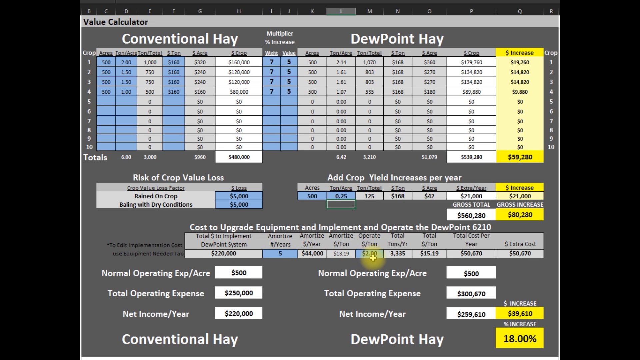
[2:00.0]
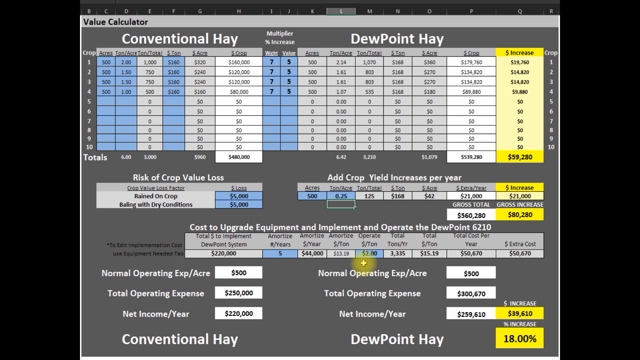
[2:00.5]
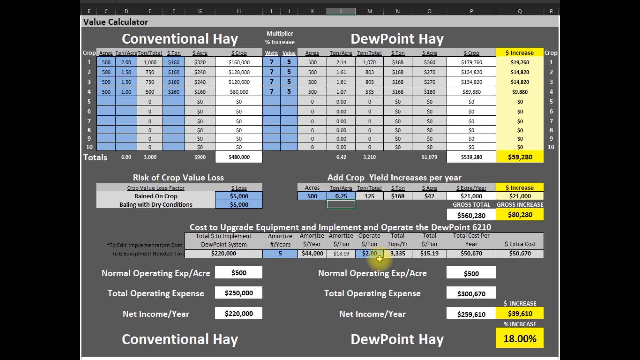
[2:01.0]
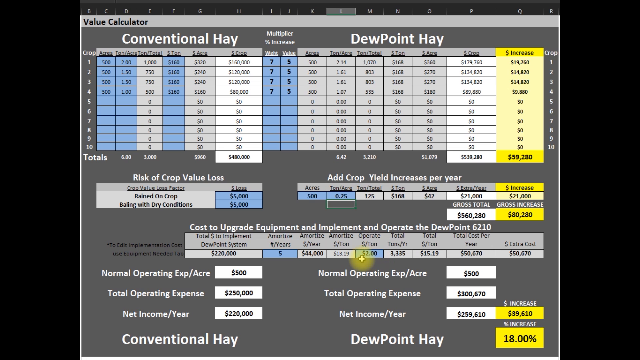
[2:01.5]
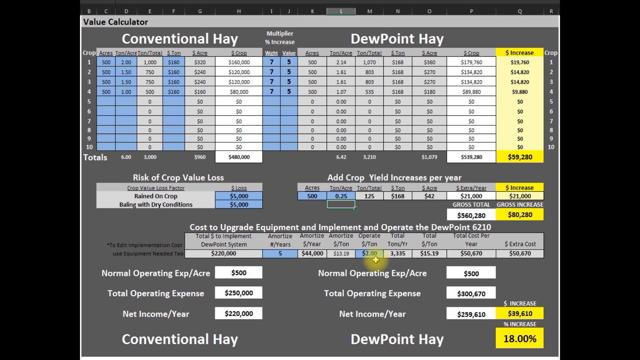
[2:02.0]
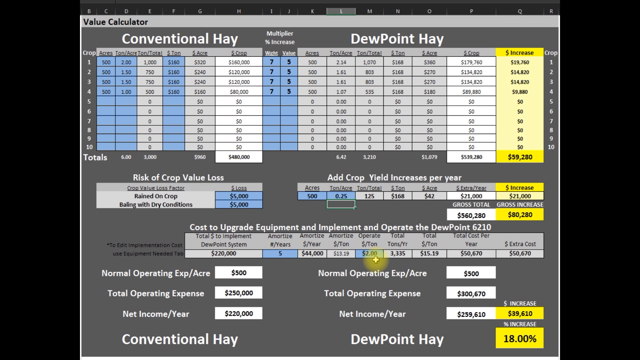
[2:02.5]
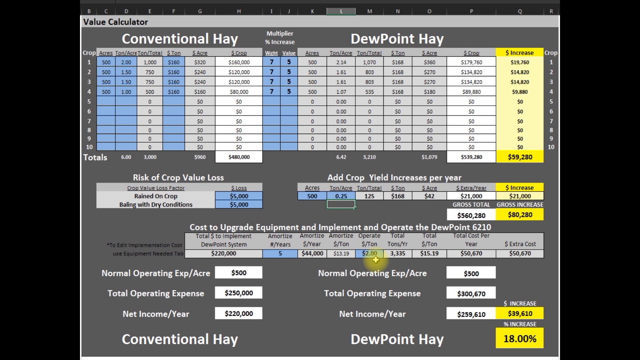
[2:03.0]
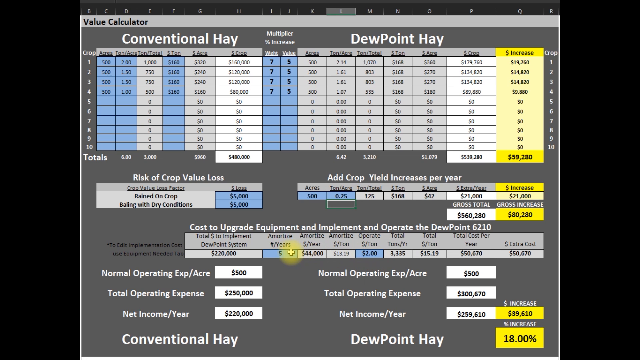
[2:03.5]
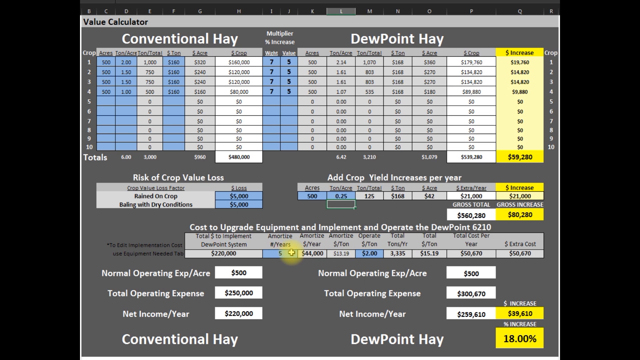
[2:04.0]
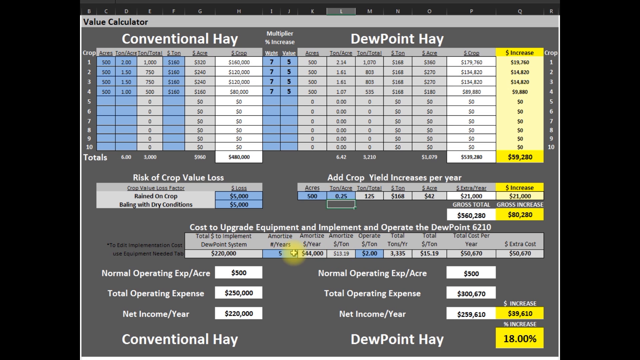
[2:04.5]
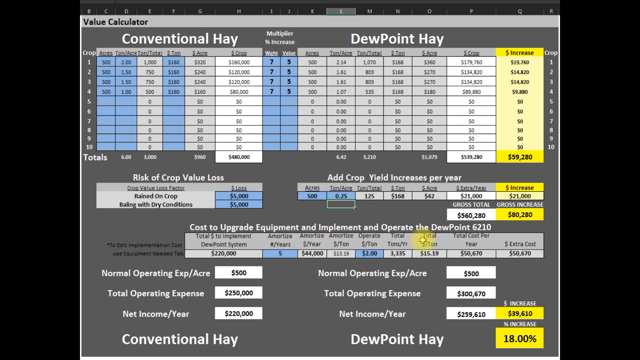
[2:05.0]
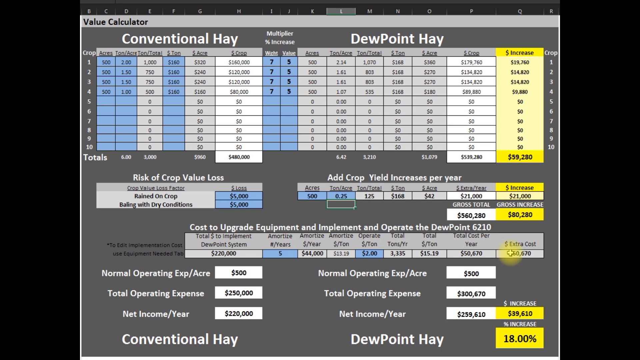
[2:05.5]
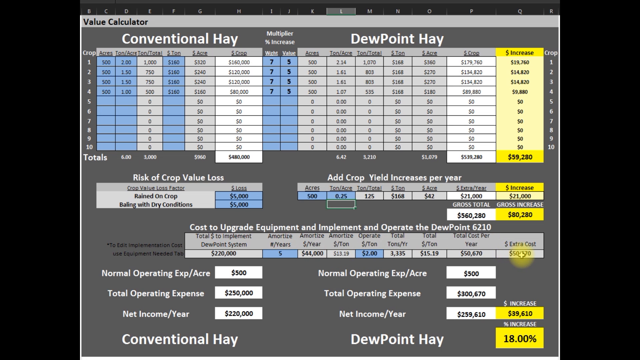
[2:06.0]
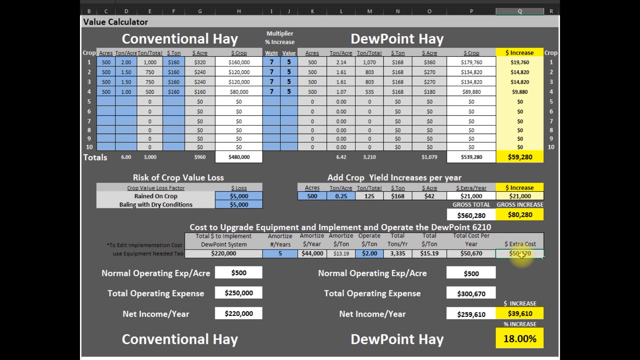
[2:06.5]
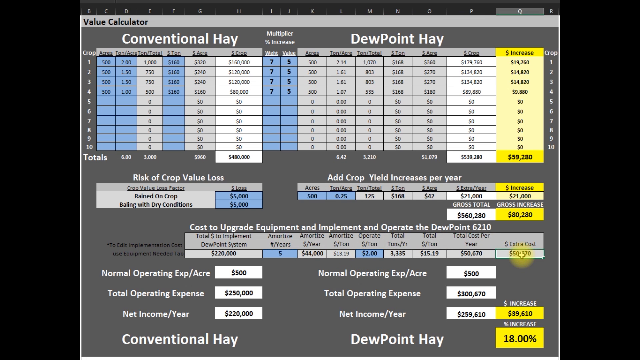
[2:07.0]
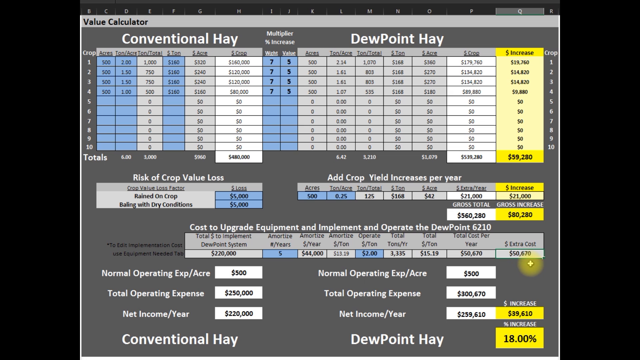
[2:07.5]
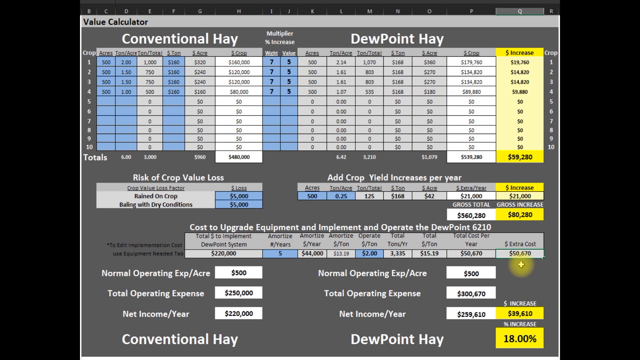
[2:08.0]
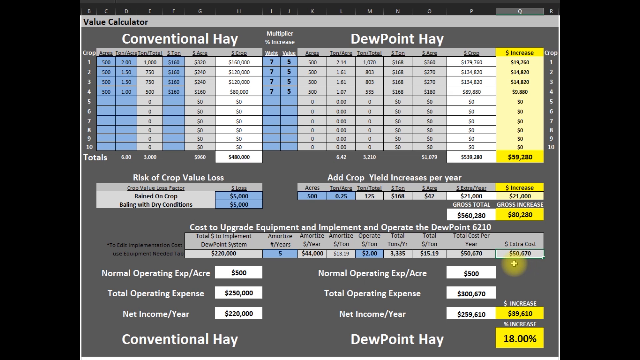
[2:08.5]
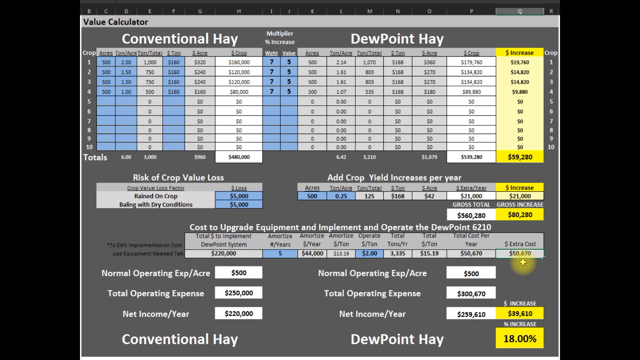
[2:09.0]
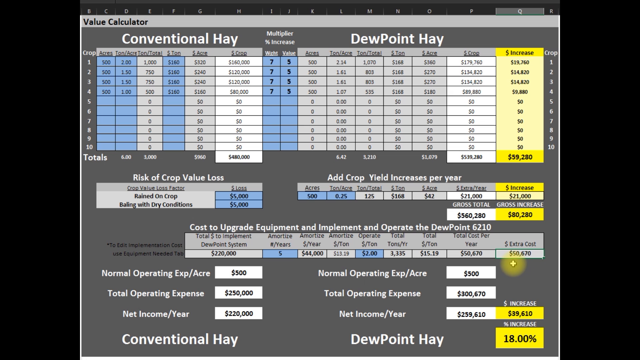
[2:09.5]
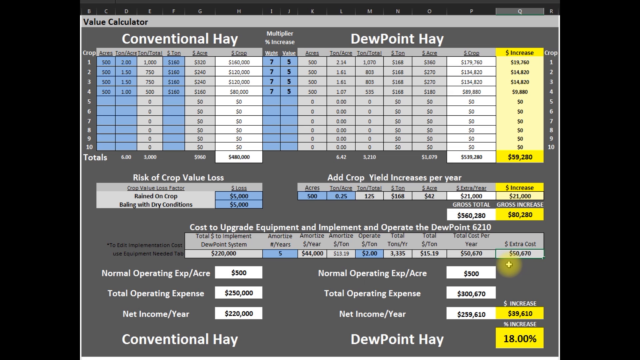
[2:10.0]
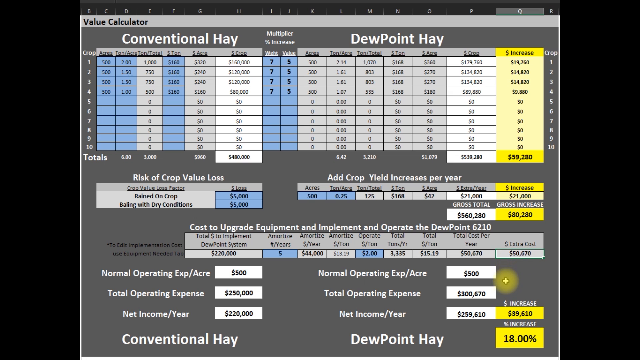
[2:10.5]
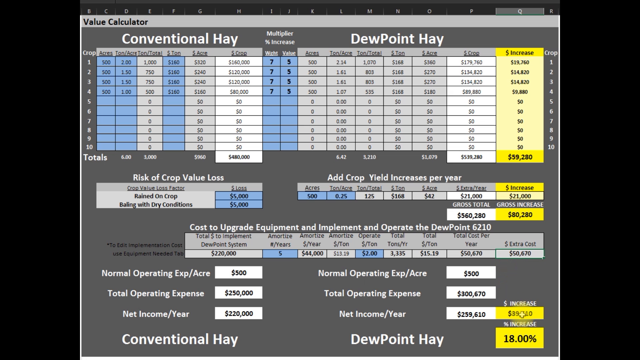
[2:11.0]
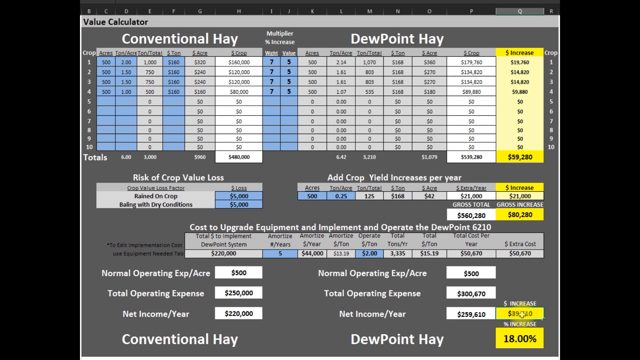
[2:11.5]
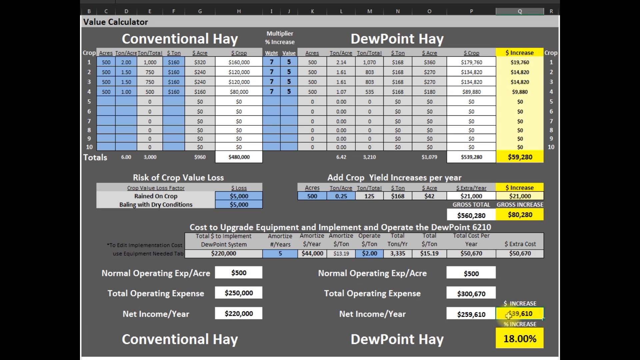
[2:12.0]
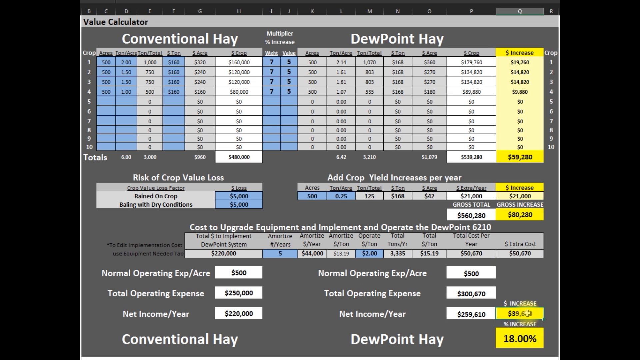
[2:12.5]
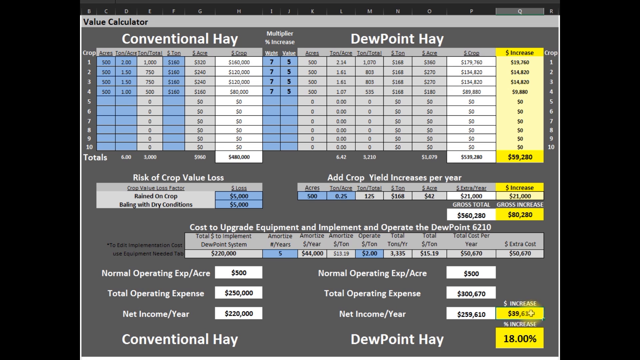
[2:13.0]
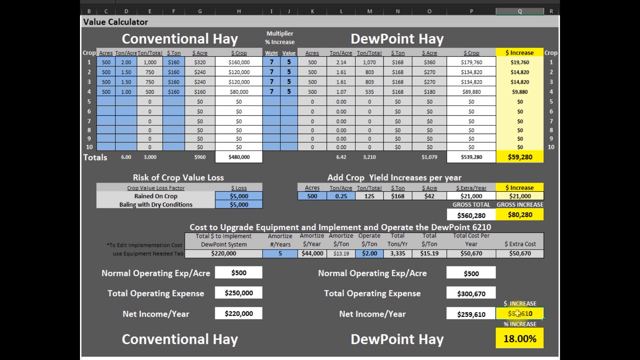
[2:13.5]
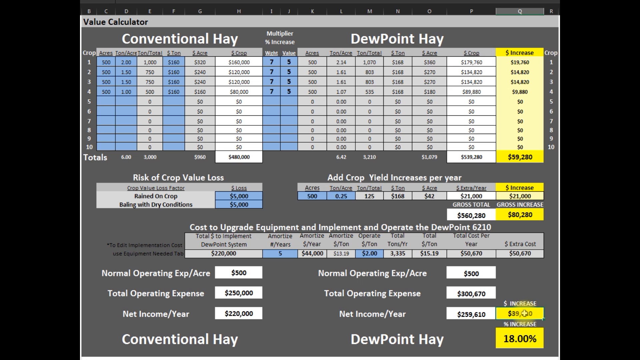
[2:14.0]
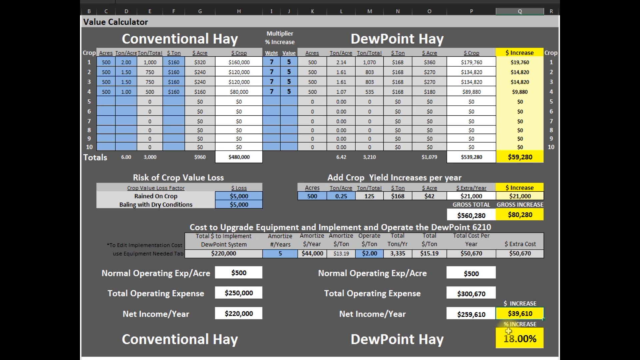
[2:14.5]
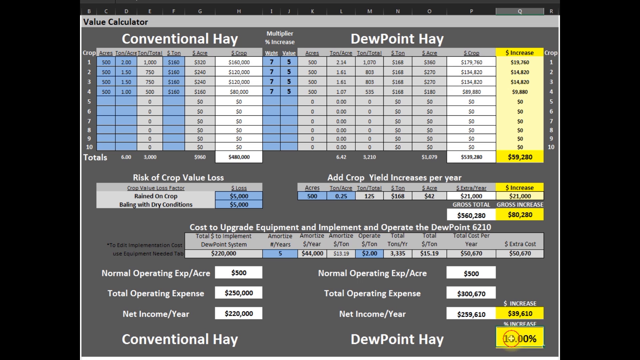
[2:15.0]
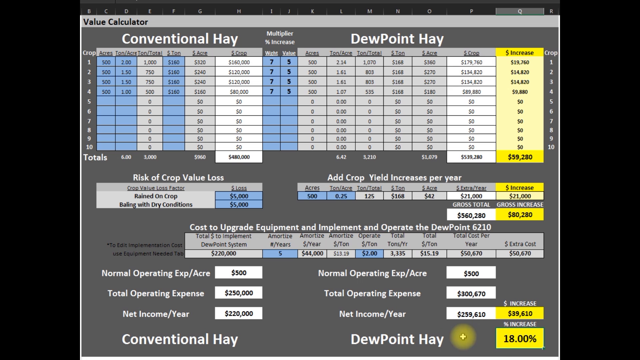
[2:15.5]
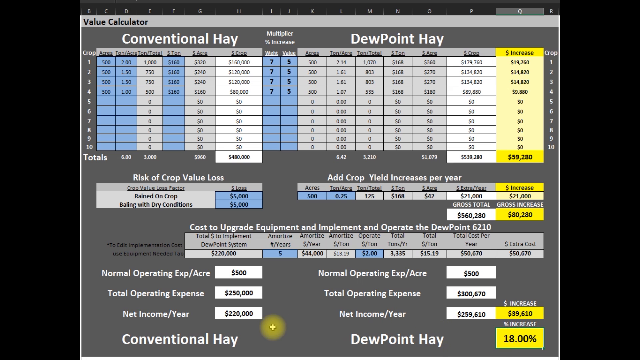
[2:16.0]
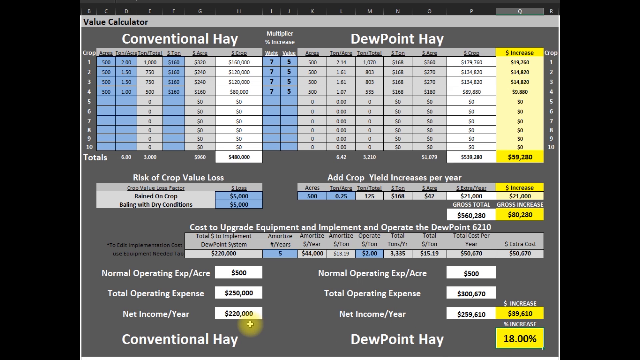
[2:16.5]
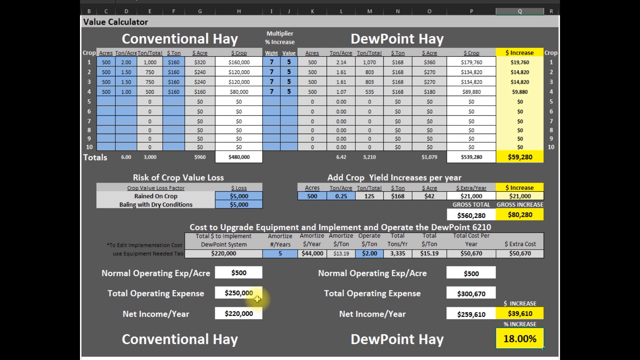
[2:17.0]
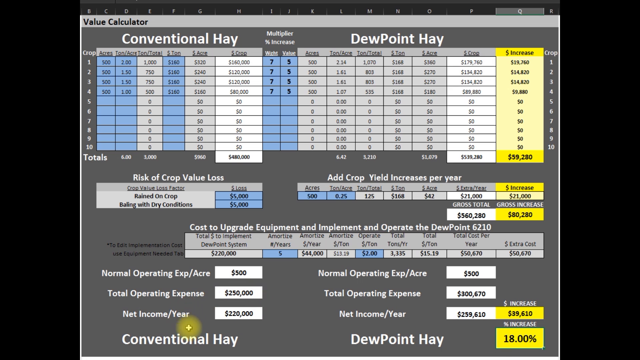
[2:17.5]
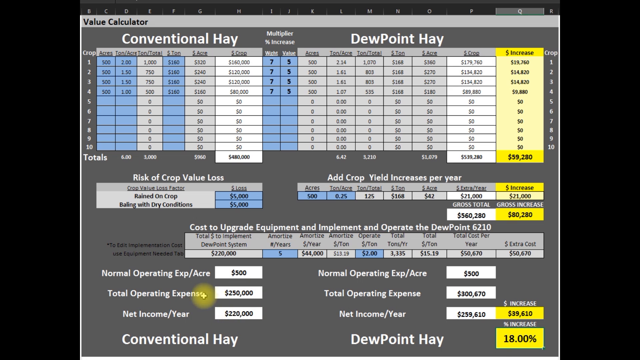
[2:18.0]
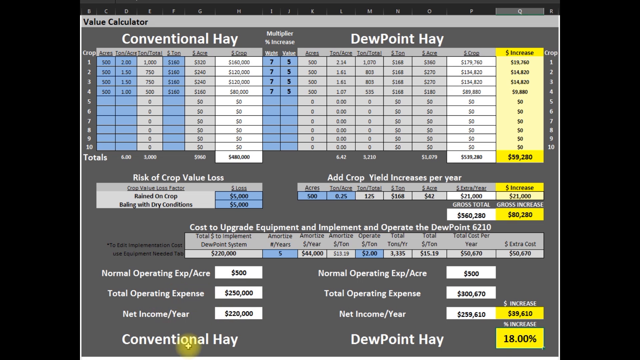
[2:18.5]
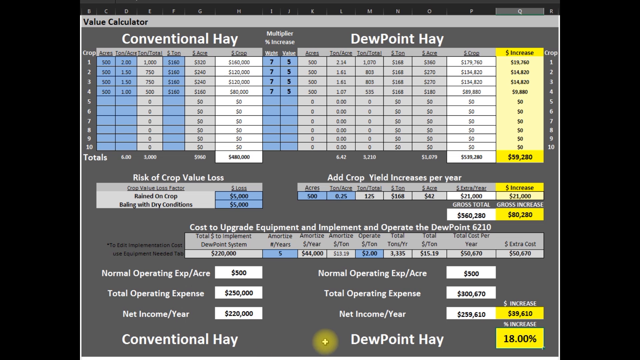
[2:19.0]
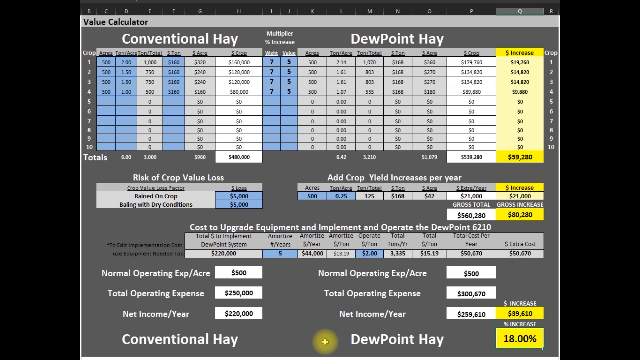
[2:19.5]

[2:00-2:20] "Value calculator" is written in black in the upper left-hand corner, above different sections of a sheet that looks very similar to an Excel sheet but without green; the background is gray. The person starts in the section that says "cost to upgrade equipment and implement and operate the dew point", followed by what looks like a euro sign or 6210. The words underneath are small and blurry when enlarged, but there are several labels saying "total"; the one on the lower left says total, possibly for the money to implement the DEW point system, with an amount that could be $220,000 or $270,000. The person hovers over one part, moving the mouse back and forth; the cursor is a white plus sign surrounded by a yellow circle. They then move down to a label that says "net income / year", and then over to "net income / year" on the left side.